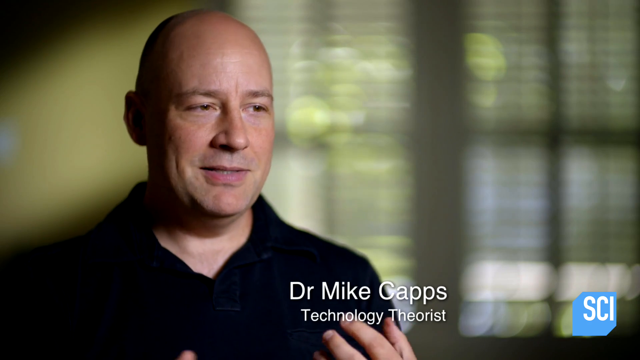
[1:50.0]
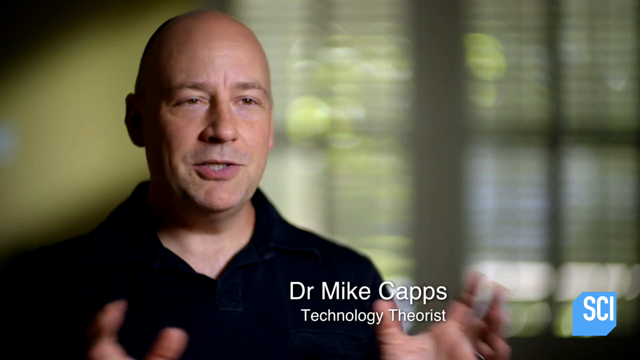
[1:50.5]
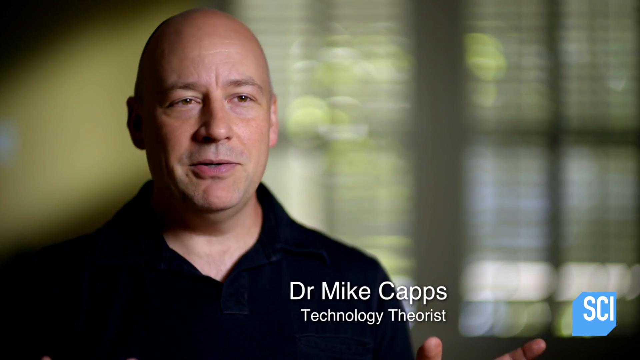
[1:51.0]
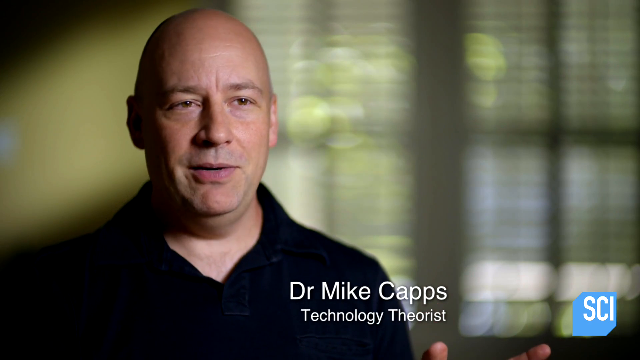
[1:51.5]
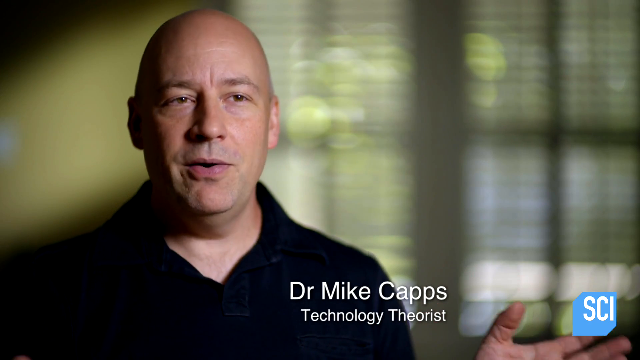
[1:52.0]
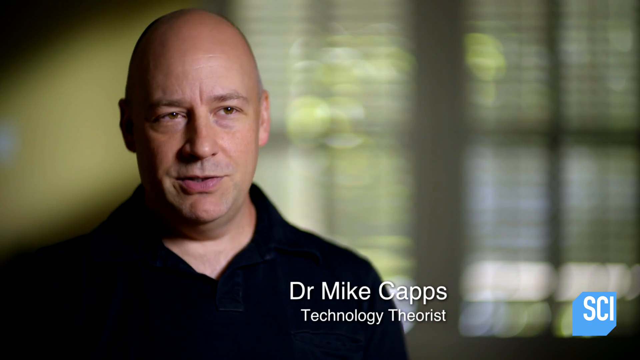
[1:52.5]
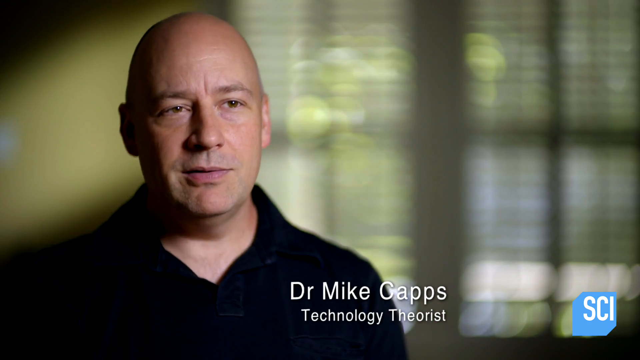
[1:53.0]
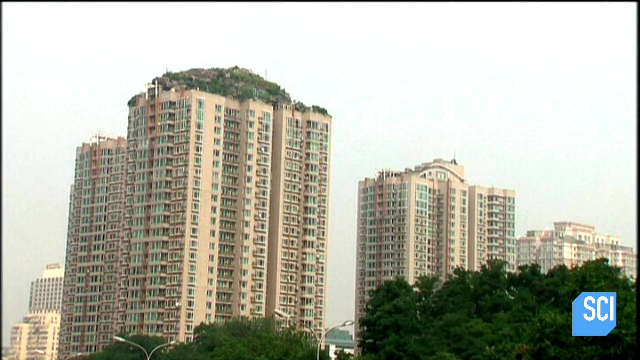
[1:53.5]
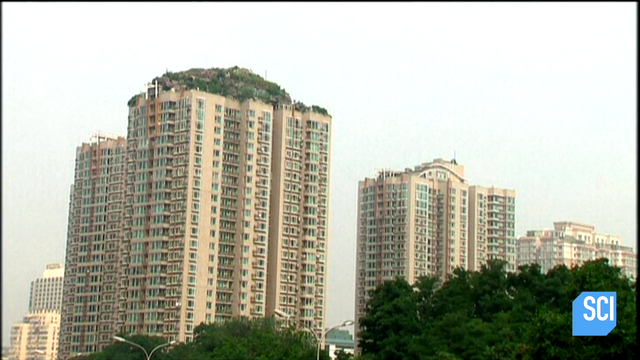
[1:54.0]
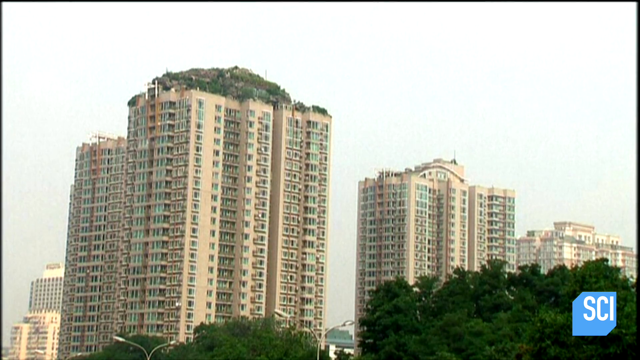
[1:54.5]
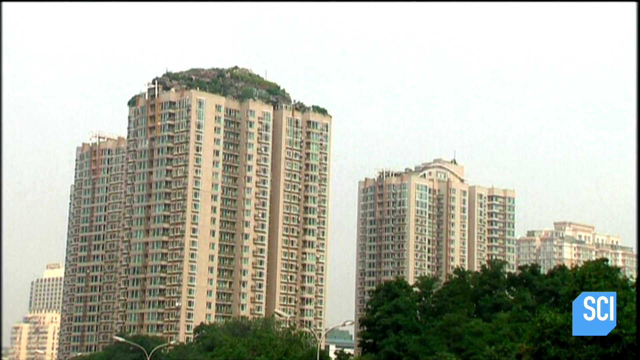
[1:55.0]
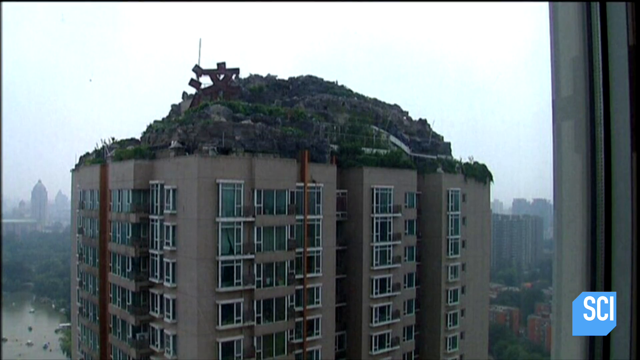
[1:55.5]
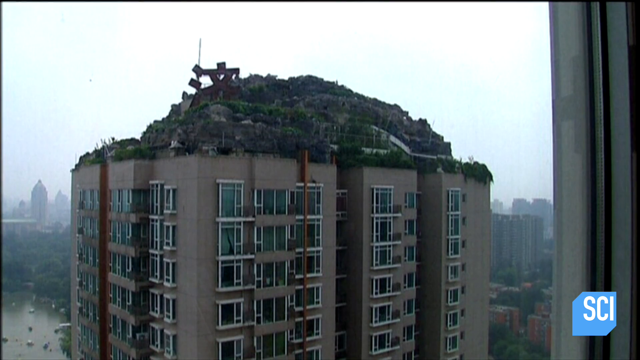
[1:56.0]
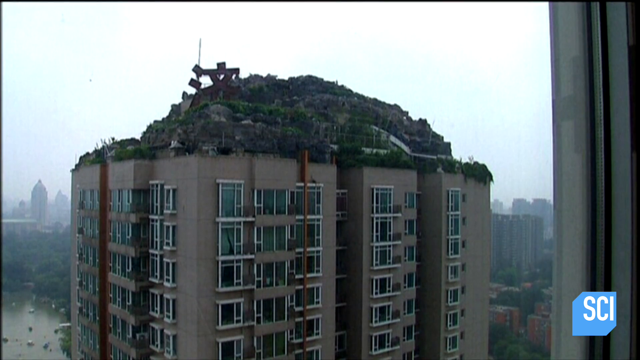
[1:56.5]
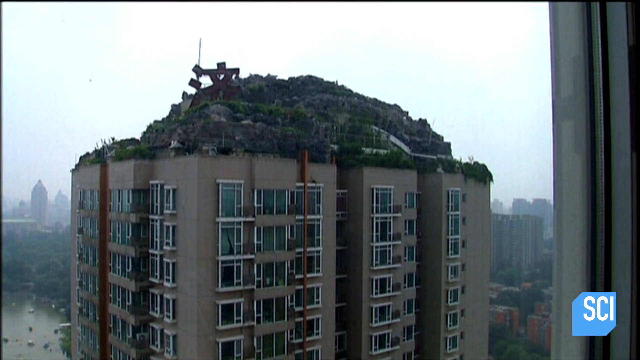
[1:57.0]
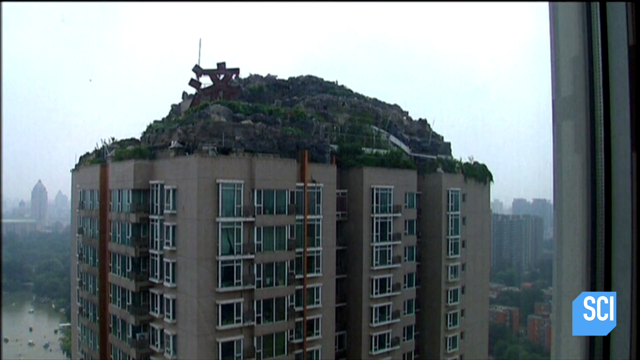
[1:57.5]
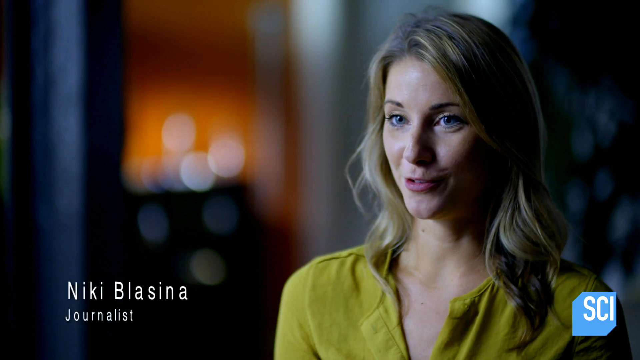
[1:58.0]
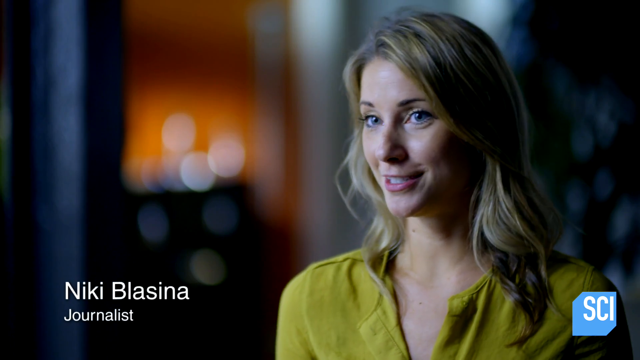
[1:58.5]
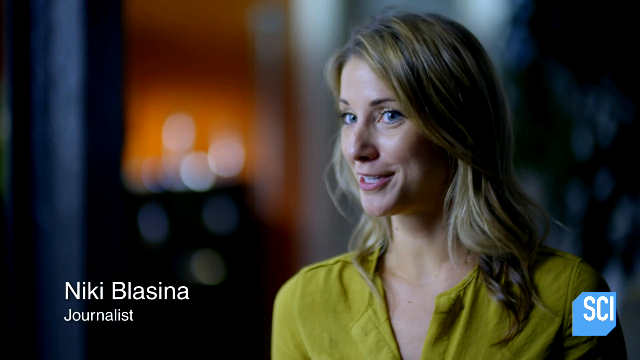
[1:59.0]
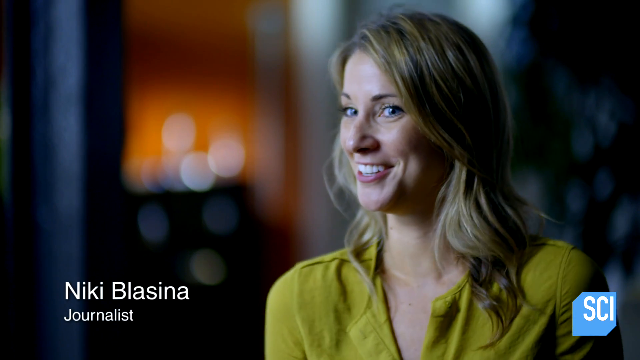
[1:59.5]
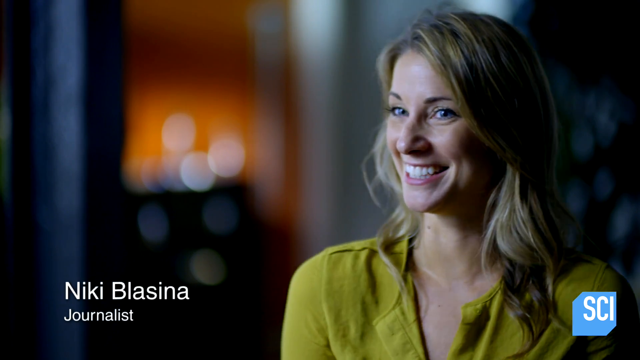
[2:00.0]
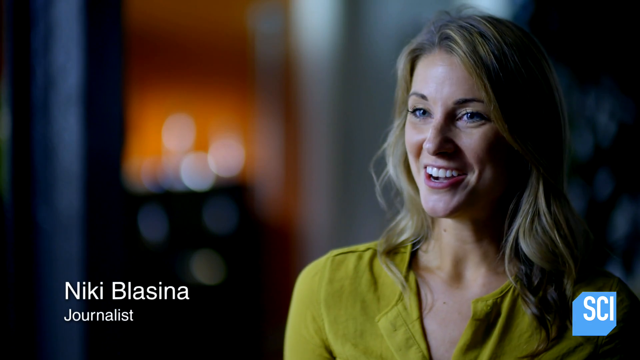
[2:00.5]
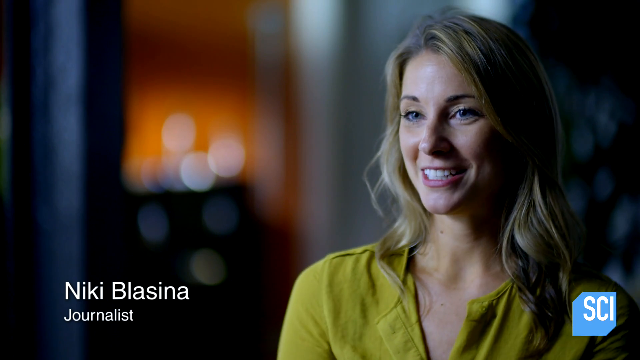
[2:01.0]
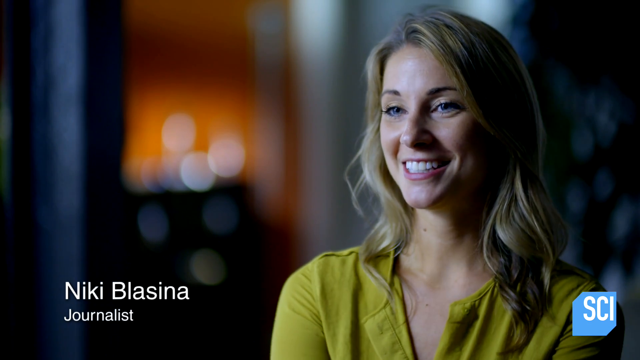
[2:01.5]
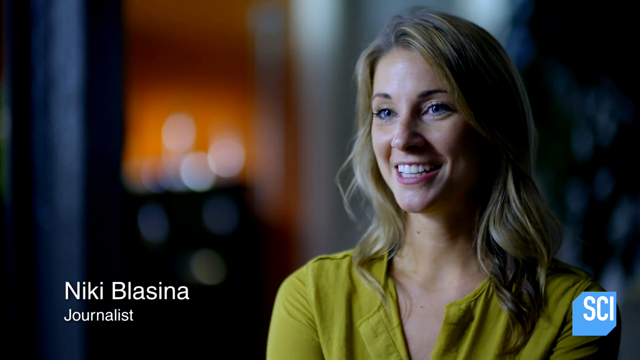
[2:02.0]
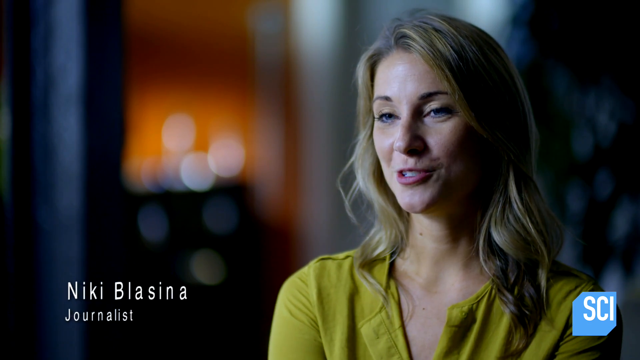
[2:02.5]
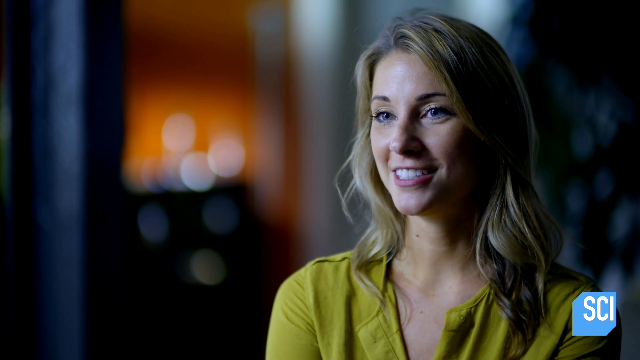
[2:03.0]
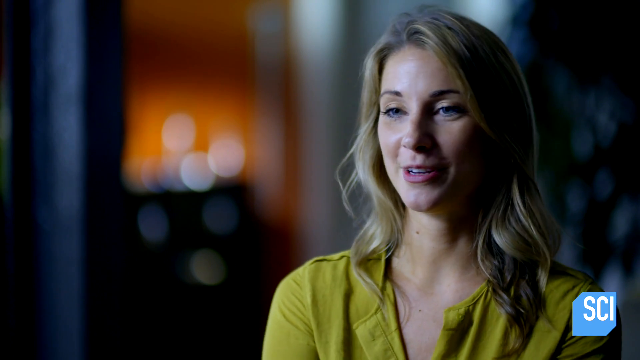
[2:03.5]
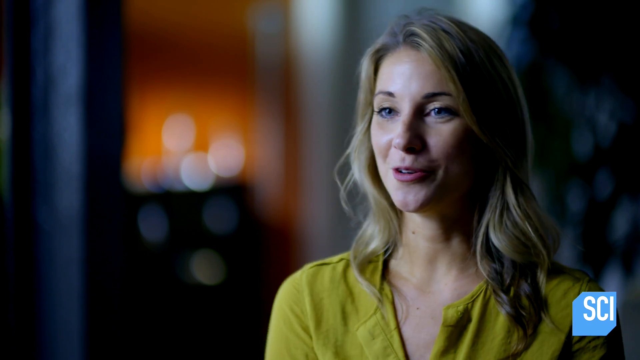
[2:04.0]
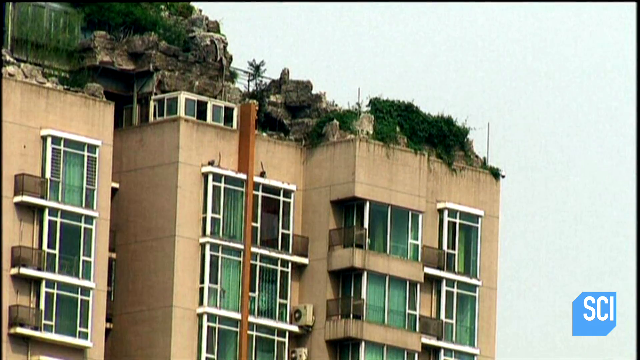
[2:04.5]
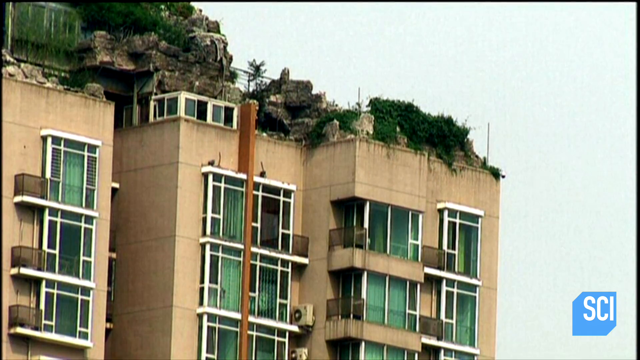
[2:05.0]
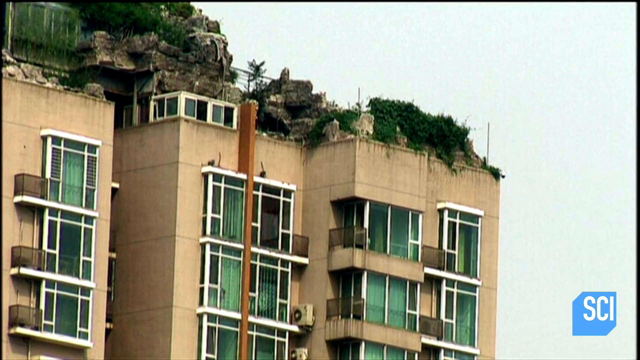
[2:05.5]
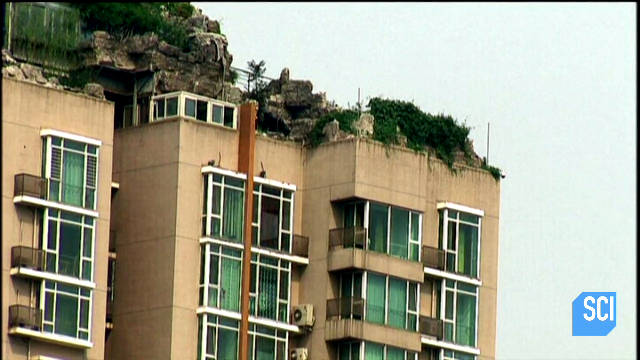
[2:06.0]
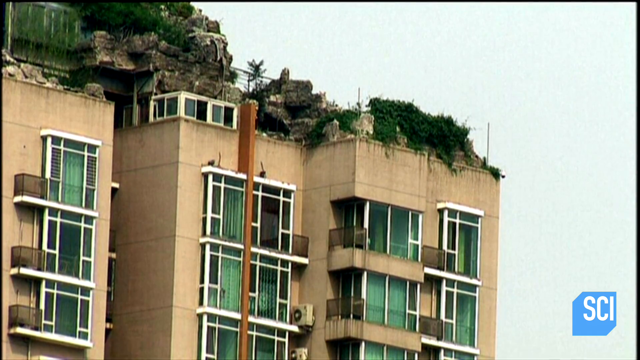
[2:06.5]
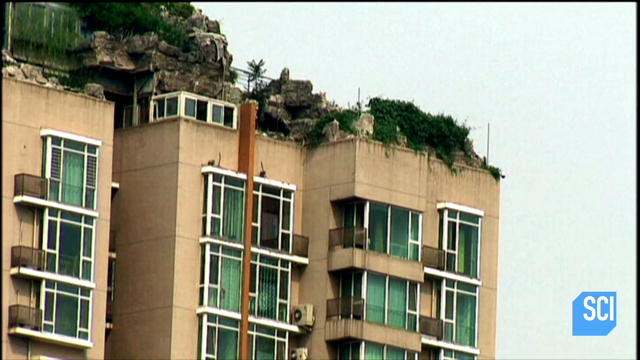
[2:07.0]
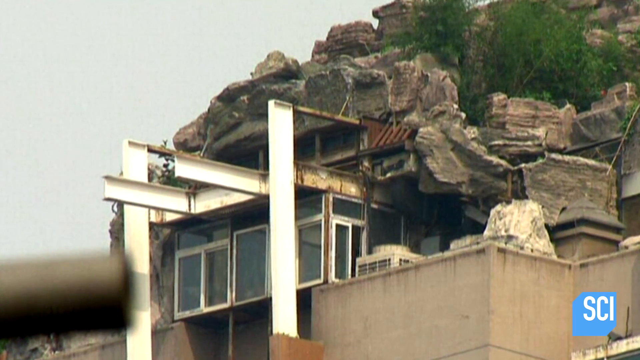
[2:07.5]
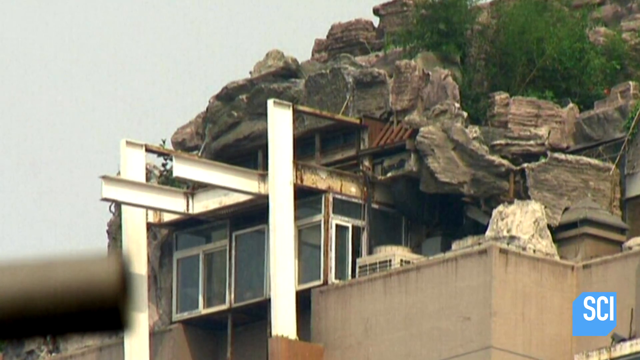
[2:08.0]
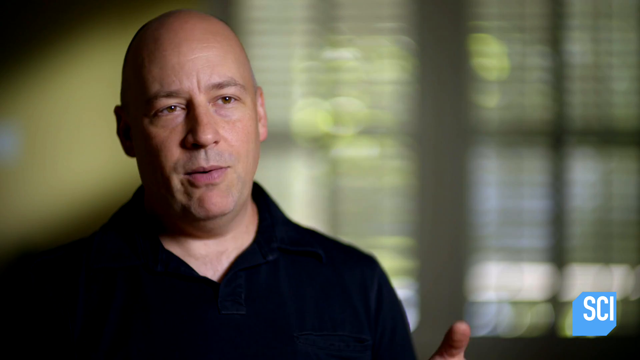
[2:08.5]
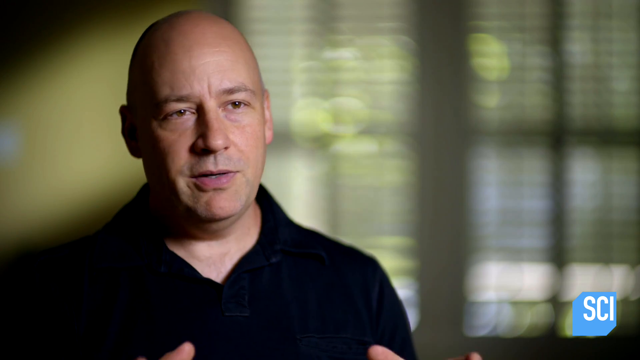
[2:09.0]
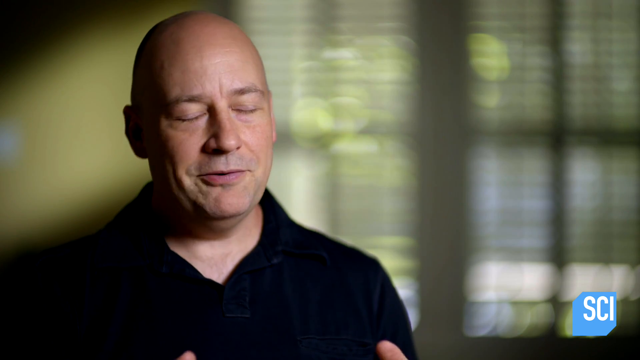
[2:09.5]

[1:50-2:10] The construction of the mountain retreat on top of the very plain, rather drab apartment building is documented. A far-off drone view shows large amounts of dirt on top of the apartment in a very rough shape. Two people are interviewed: Mike Capps, the technology theorist, and a female journalist, Nikki Bassina. Rocks start to be formed, and metal beams support them as the rocks go up around some of the windows. There are close-ups of the work and far-off views that show some of the other apartment buildings.